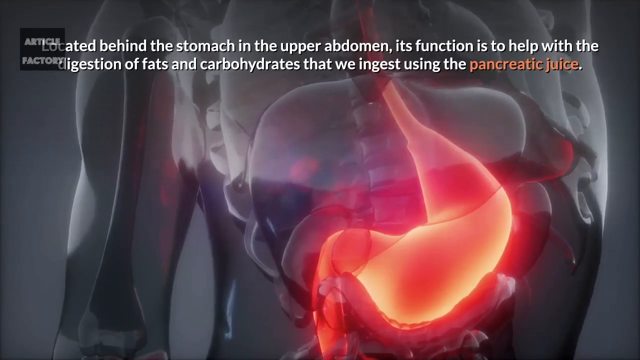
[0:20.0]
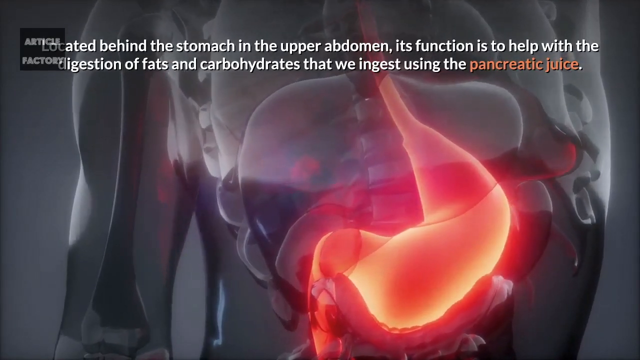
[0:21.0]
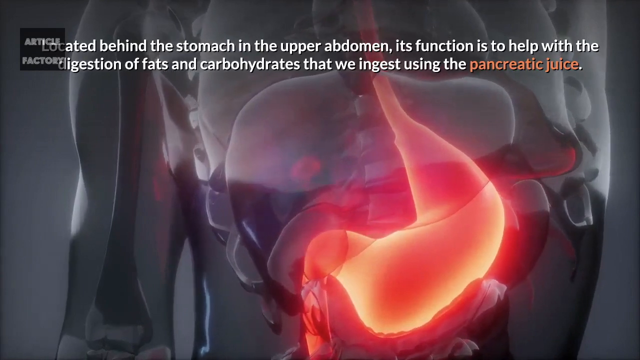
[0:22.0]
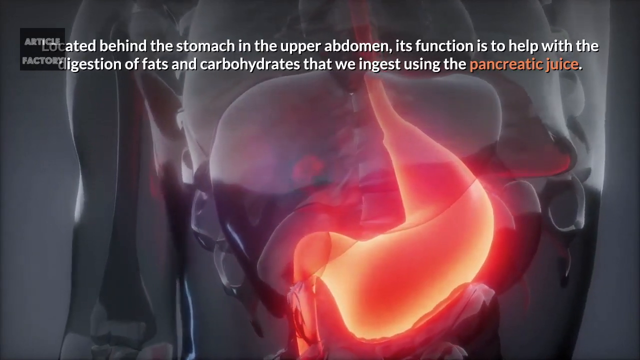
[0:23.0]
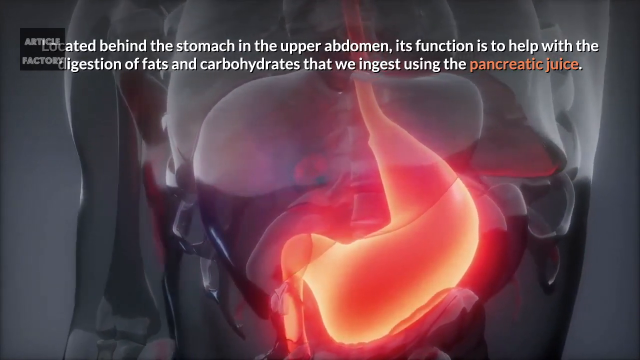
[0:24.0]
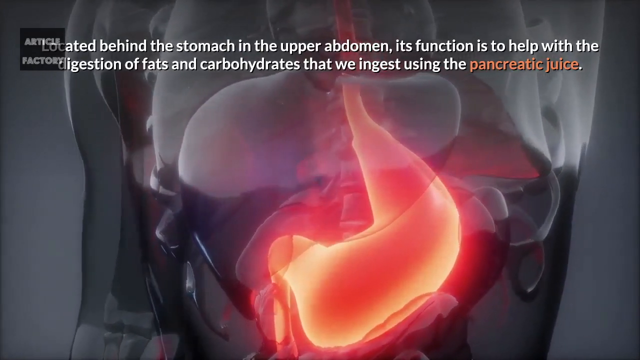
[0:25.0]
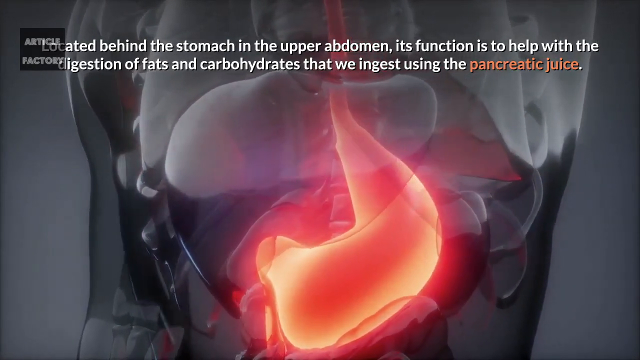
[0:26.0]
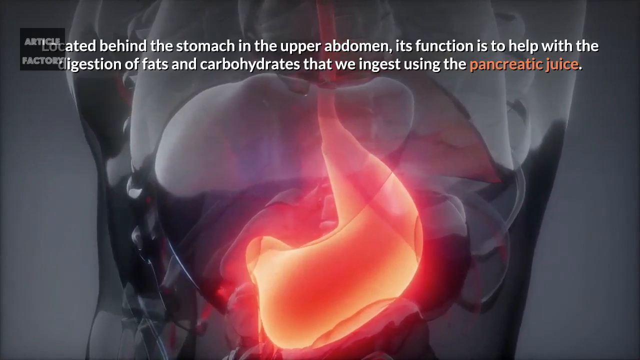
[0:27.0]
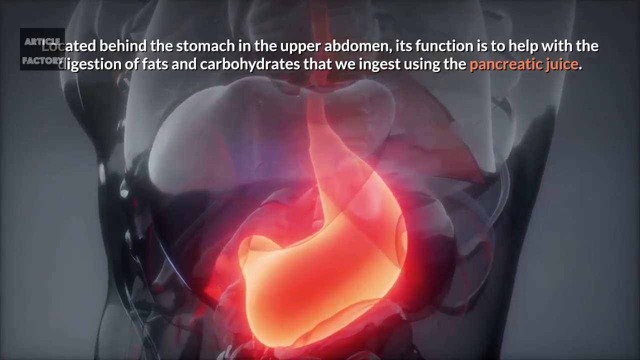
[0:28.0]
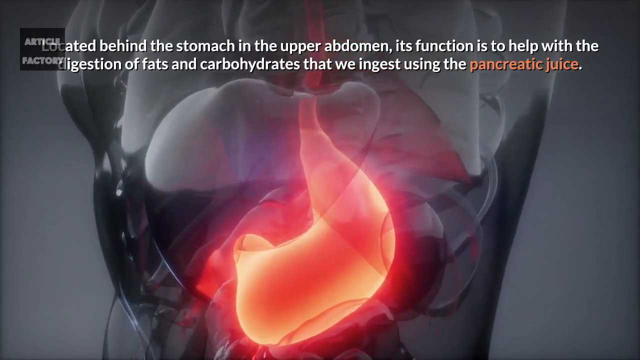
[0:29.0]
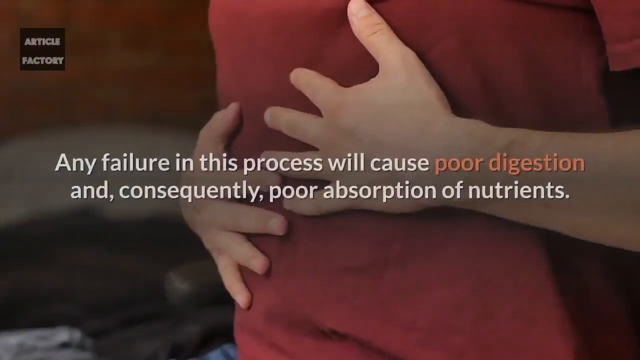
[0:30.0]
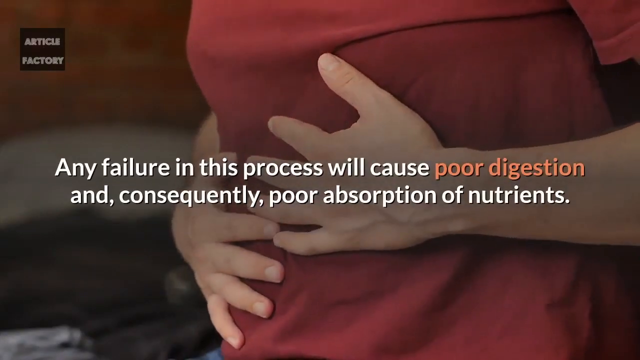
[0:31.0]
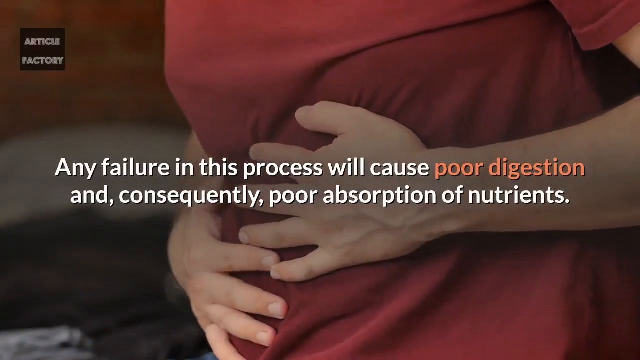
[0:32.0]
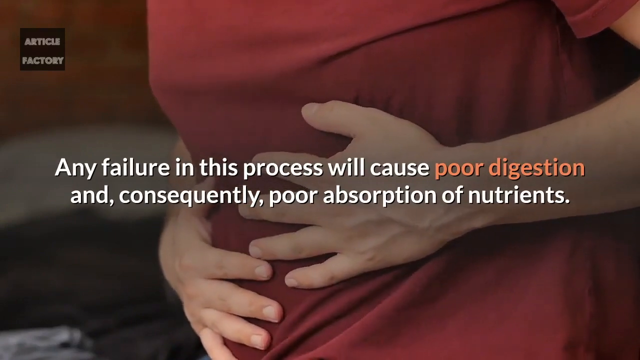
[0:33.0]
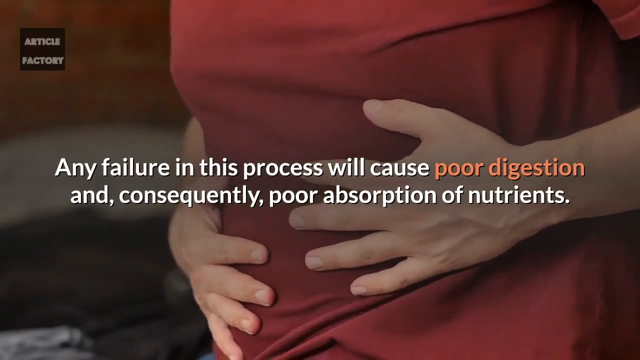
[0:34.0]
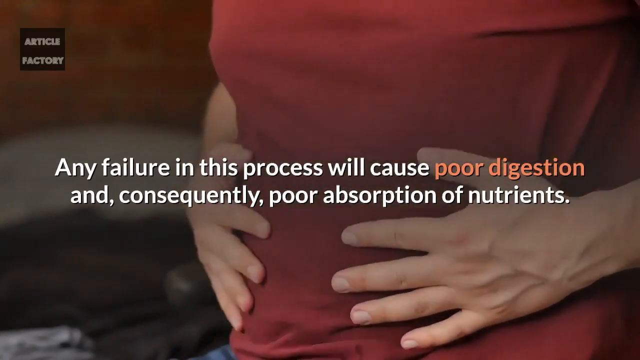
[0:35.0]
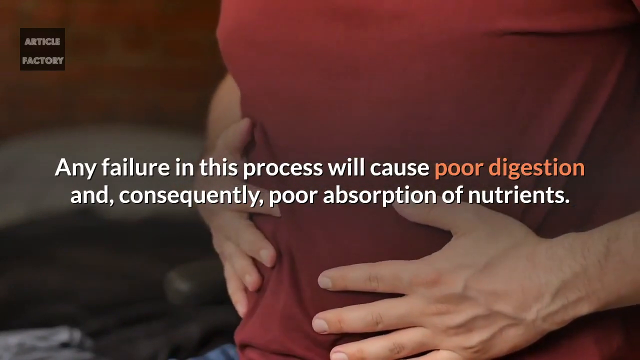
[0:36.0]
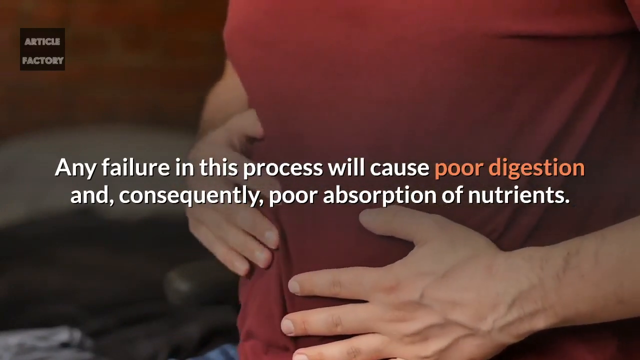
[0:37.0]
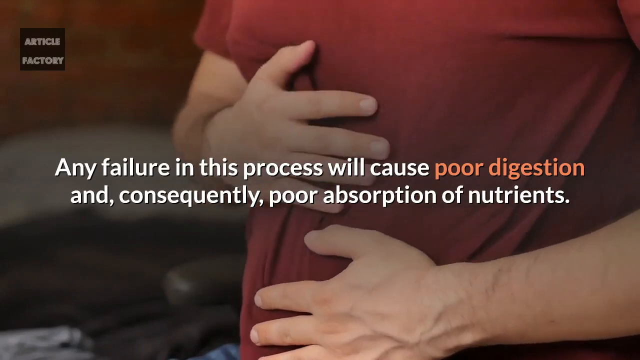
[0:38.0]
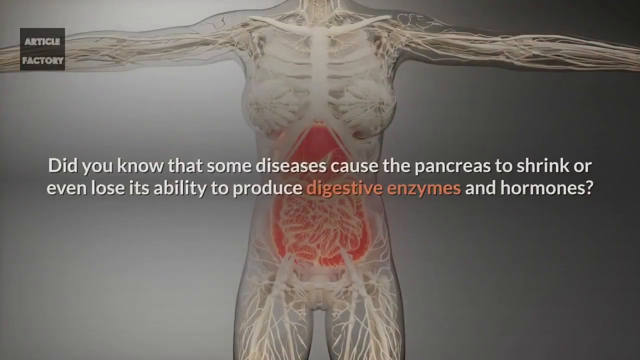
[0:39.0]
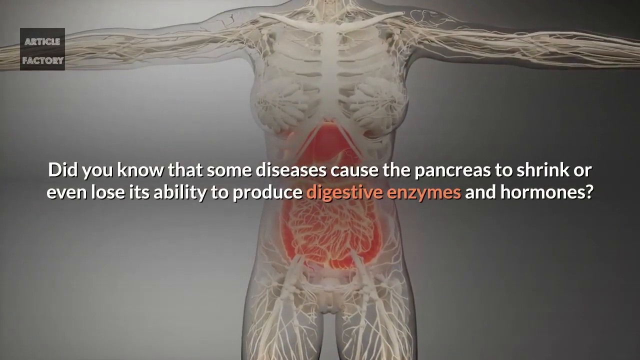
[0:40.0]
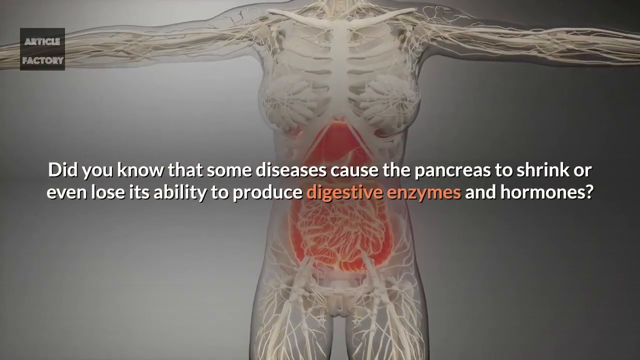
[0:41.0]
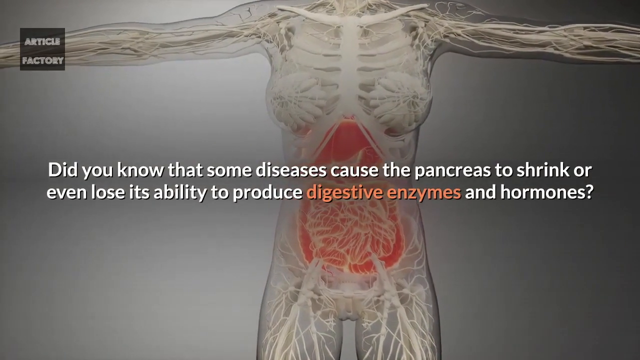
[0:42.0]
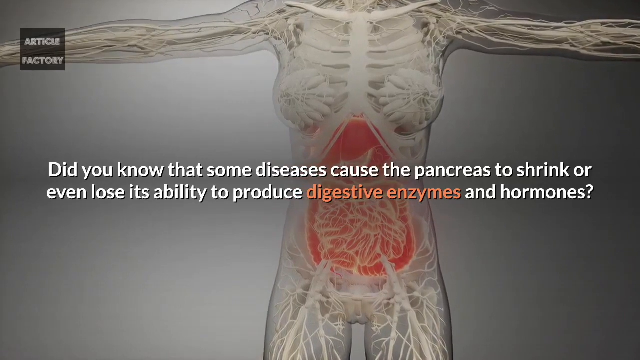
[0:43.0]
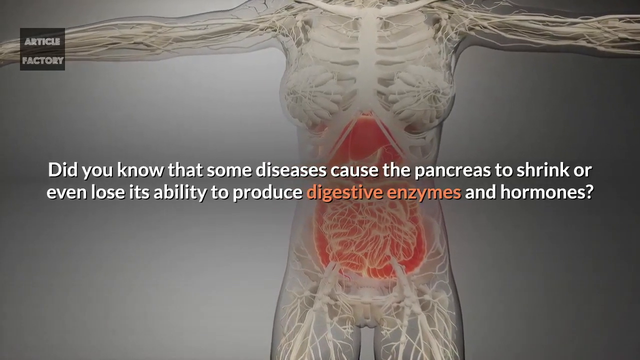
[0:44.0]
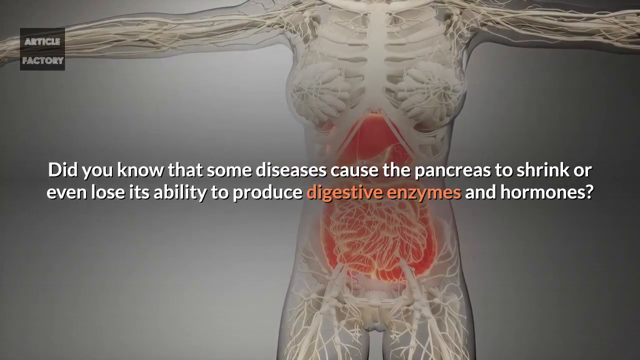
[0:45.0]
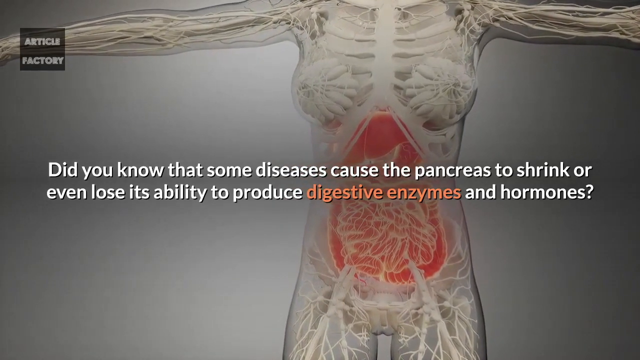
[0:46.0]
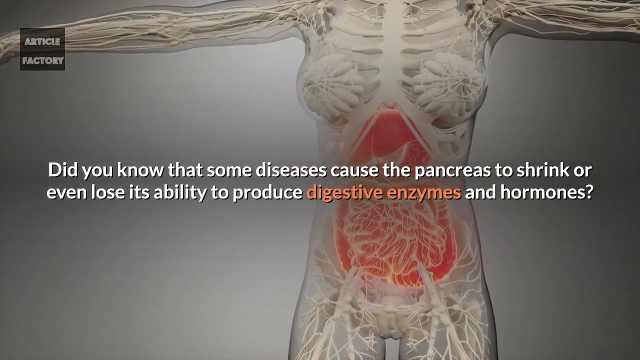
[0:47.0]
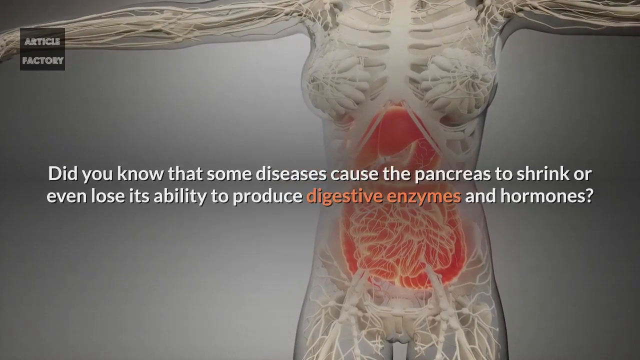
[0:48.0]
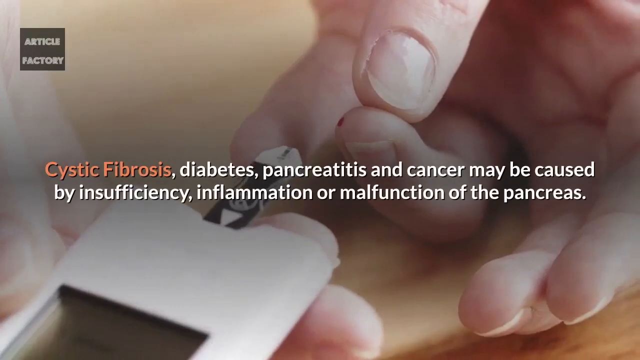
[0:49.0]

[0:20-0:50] The text reads: "Located behind the stomach in the upper abdomen, its function is to help with the digestion of fats and carbohydrates that we ingest using the pancreatic juice." The view then shows the inside of what appears to be the stomach, with the text "Any failure in this process will cause poor digestion and consequently poor absorption of nutrients." Next comes the question "Did you know that some diseases cause the pancreas to shrink or even lose its ability to produce digestive enzymes and hormones?" followed by "cystic fibrosis, diabetes, pancreatitis, and cancer may be caused by insufficiency, inflammation, or malfunction of the pancreas."